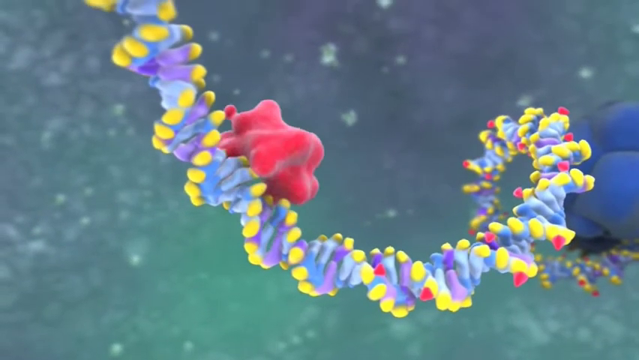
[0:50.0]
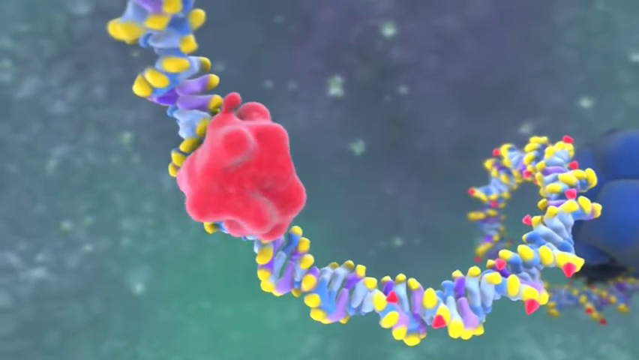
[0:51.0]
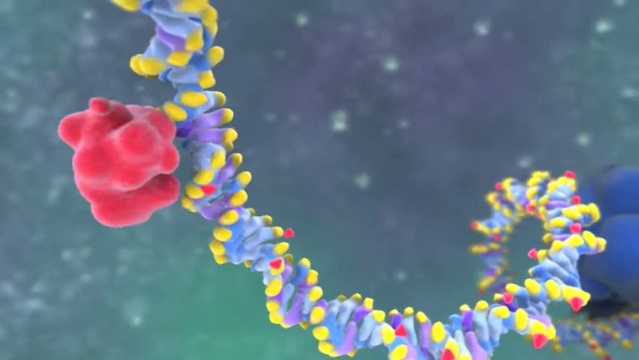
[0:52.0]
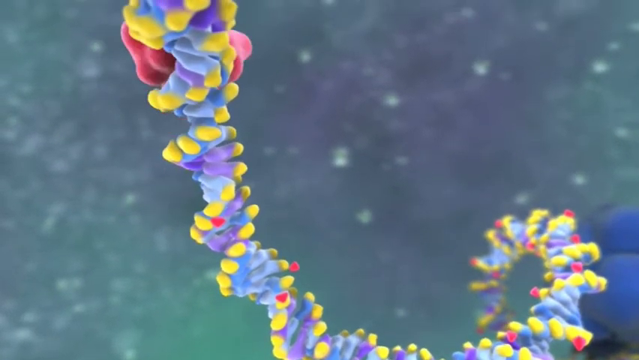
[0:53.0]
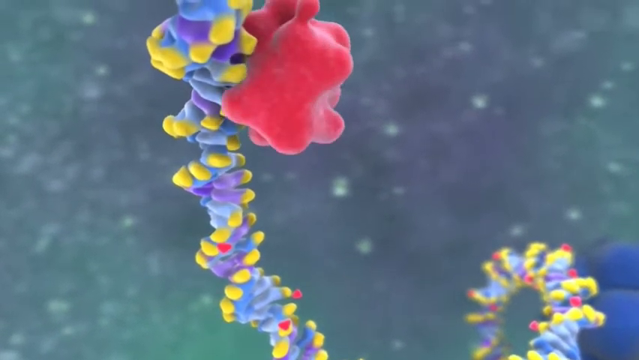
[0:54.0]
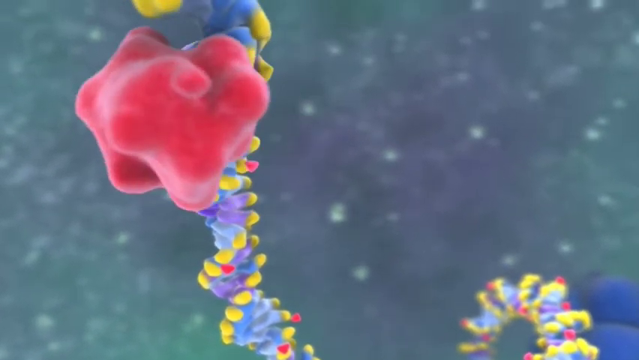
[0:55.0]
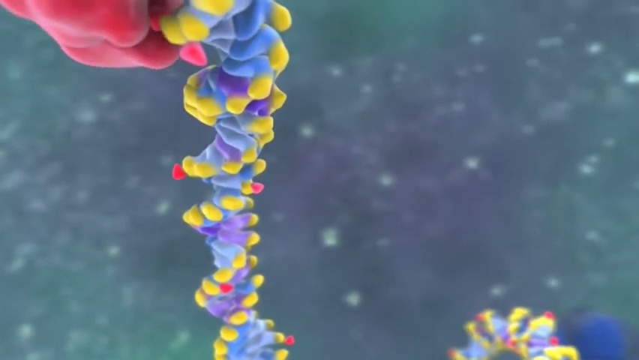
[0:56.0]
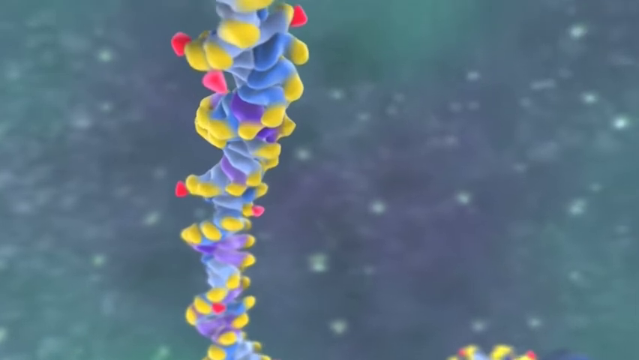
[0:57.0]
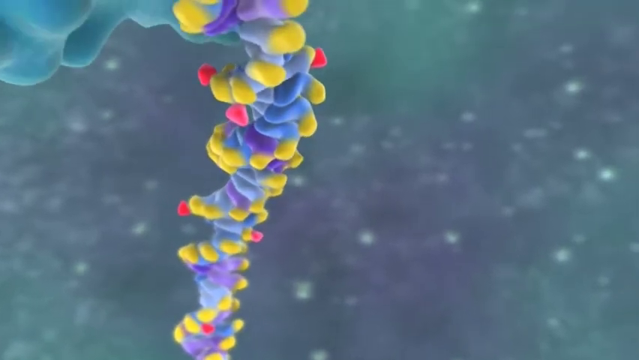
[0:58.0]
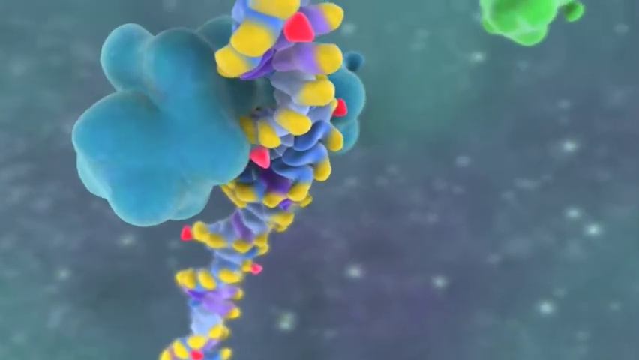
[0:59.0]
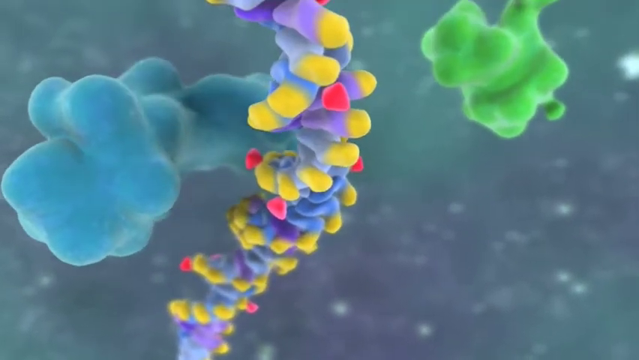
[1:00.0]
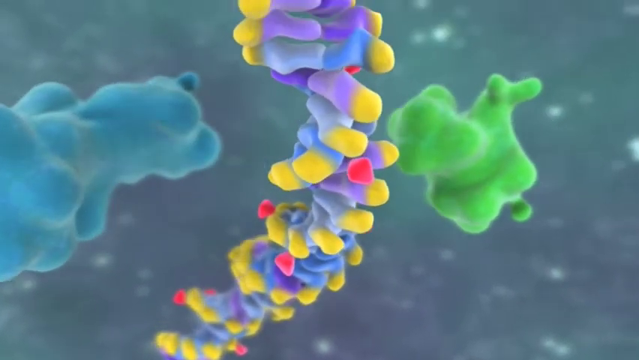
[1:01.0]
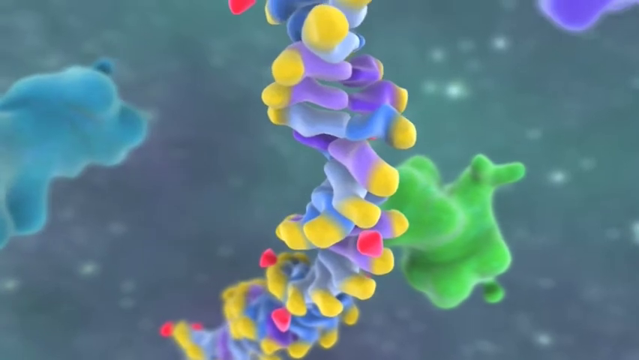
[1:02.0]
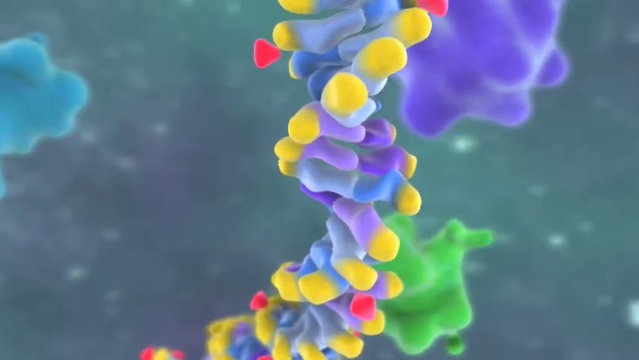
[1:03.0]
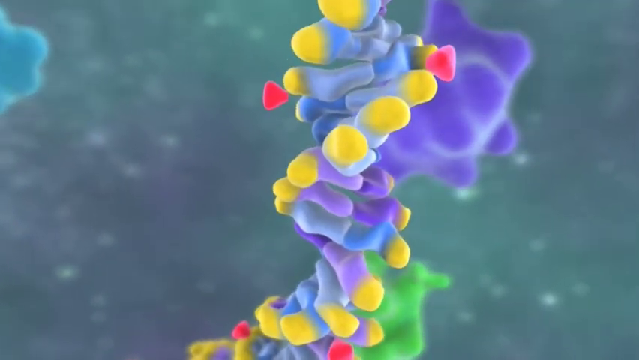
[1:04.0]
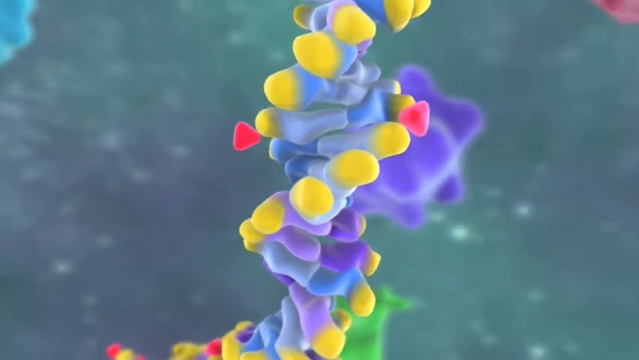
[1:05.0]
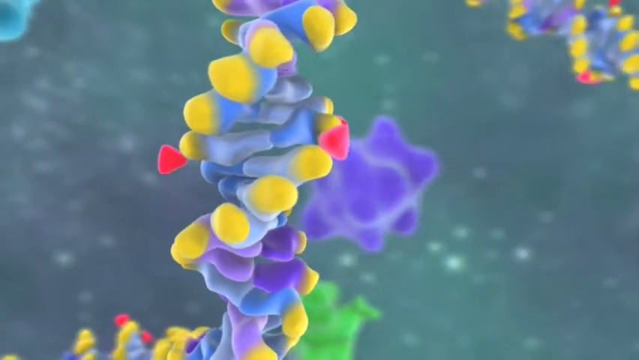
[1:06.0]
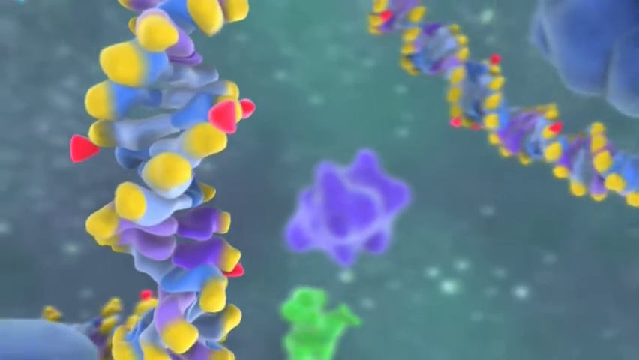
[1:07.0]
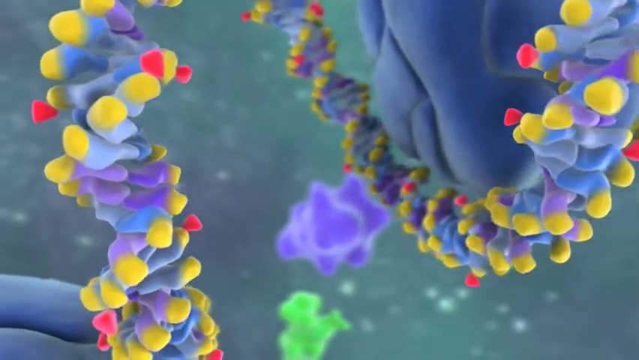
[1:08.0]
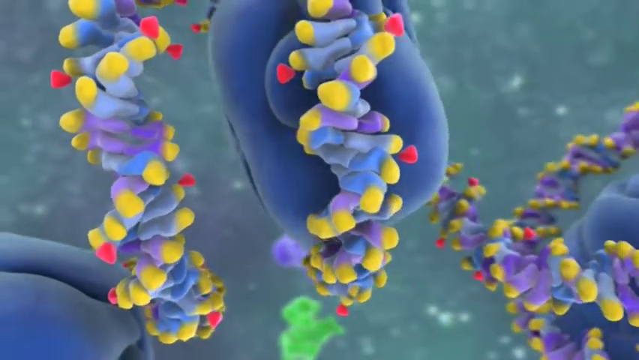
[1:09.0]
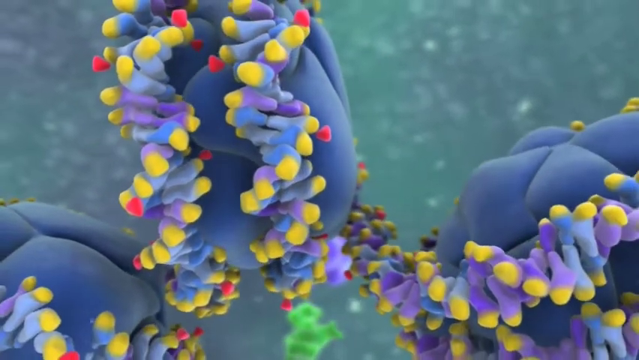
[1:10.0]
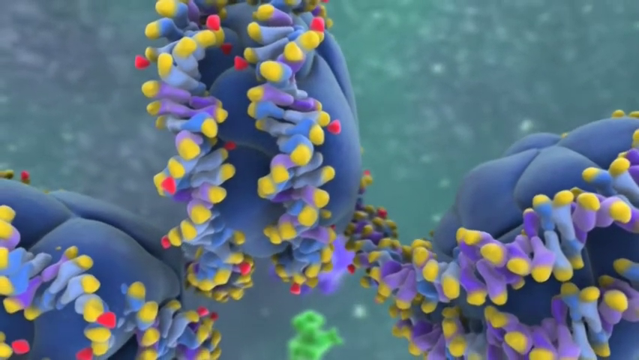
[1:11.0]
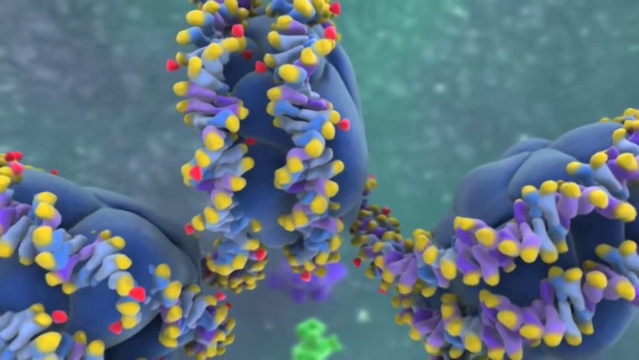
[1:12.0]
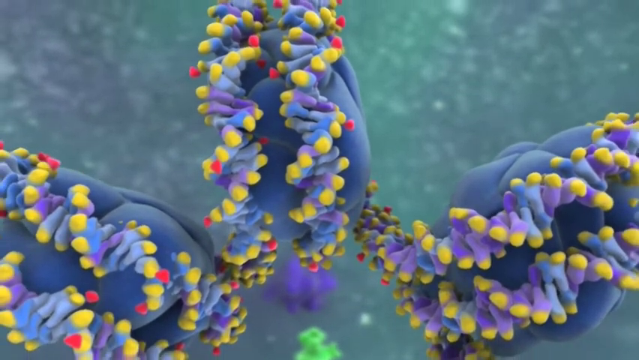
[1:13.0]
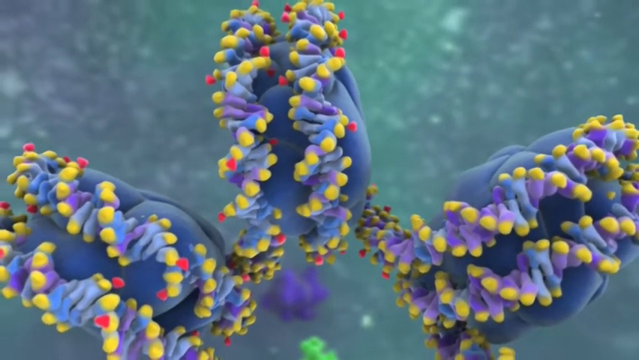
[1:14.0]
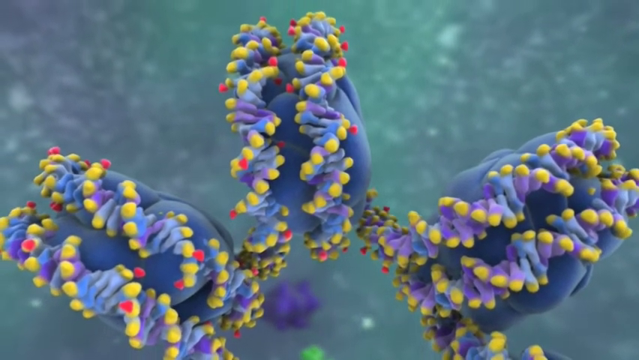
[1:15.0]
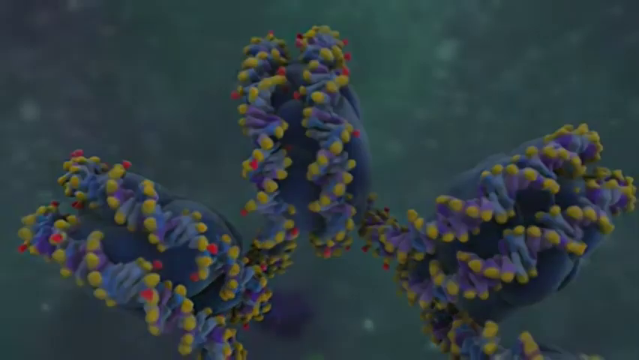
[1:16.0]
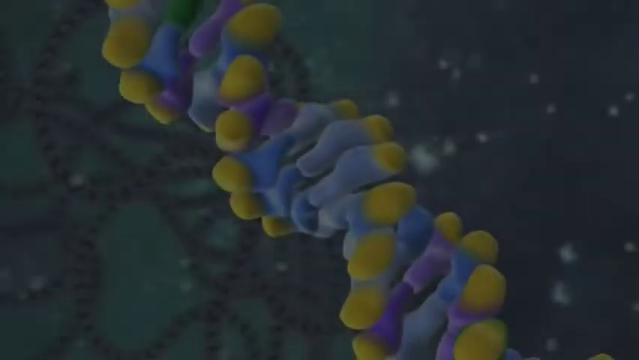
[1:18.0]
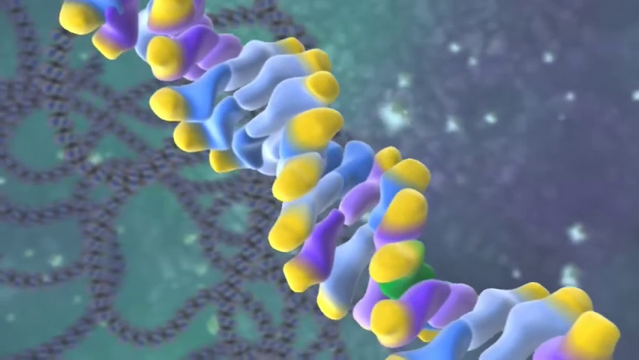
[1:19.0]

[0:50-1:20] Still somewhere inside the body, a long, kind of blue and purple rope-like structure has small yellow, kind of ball-like shapes attached to it, wrapped around the structure in a spiral-like fashion, and a few small red shapes attached sporadically along it. A big red blob has attached itself to the outside of the structure and swirls around it, moving upwards. From the left side of the screen, a big blue blob flies into the structure and seemingly bounces off it. From the right-hand side, a slightly smaller but still quite large green blob floats into view and past the structure, followed by a big purple blob. The rope structure then compresses and coils together, wrapping itself around three large round blue shapes as the video fades to black.